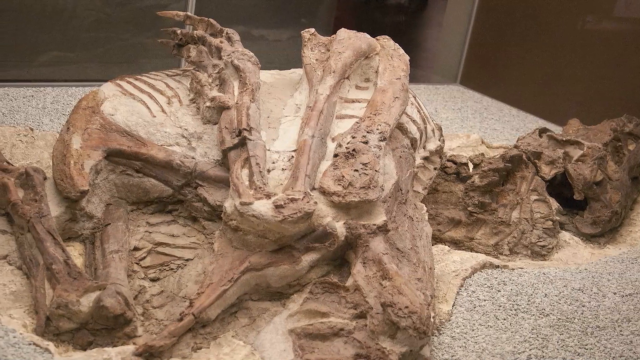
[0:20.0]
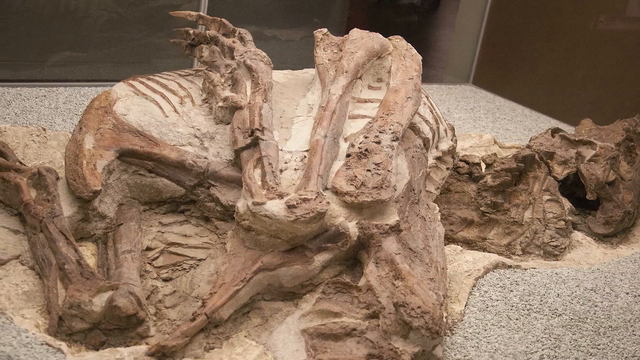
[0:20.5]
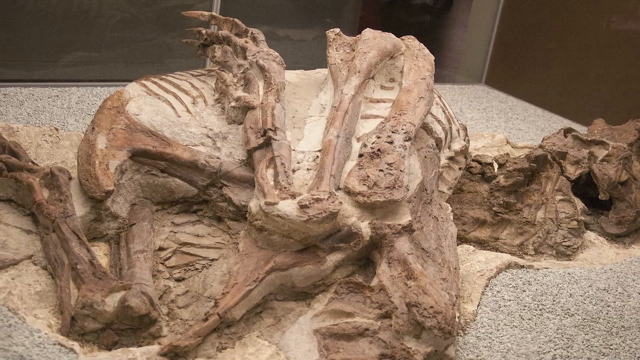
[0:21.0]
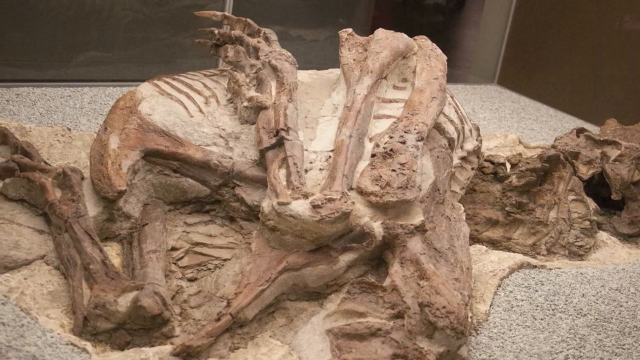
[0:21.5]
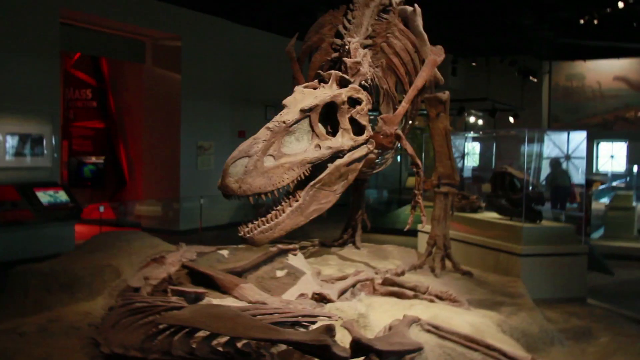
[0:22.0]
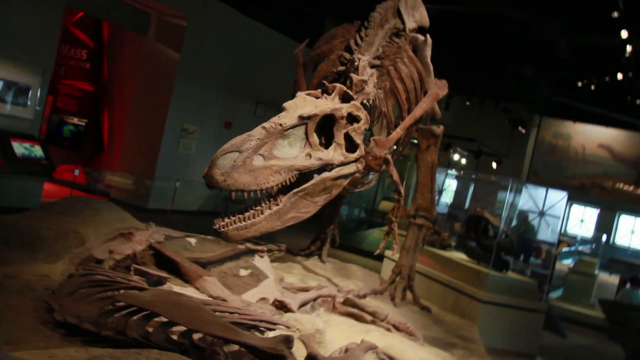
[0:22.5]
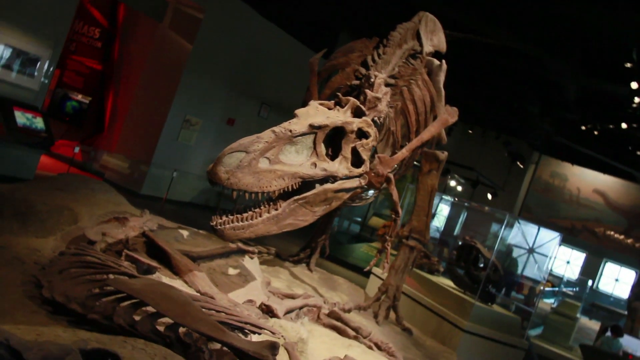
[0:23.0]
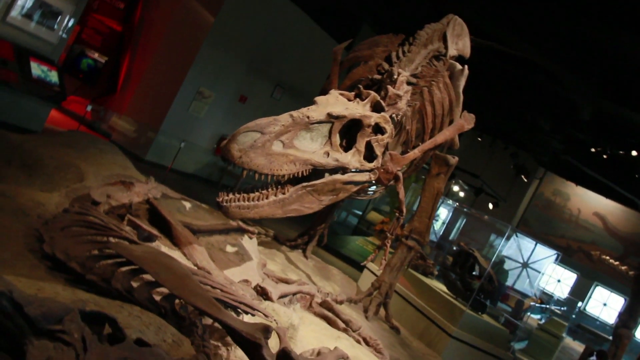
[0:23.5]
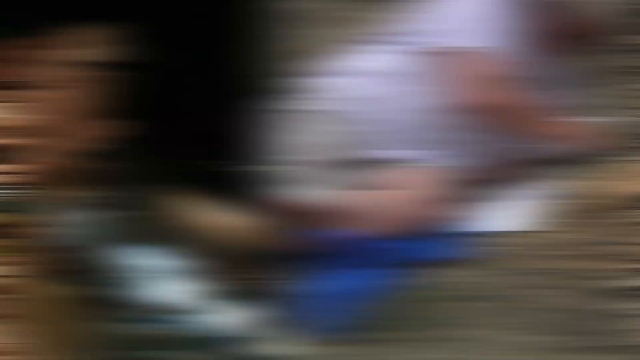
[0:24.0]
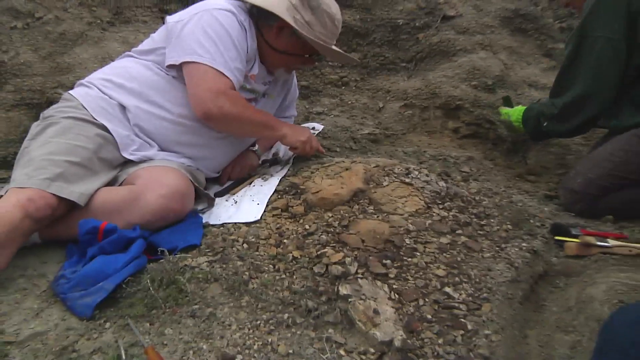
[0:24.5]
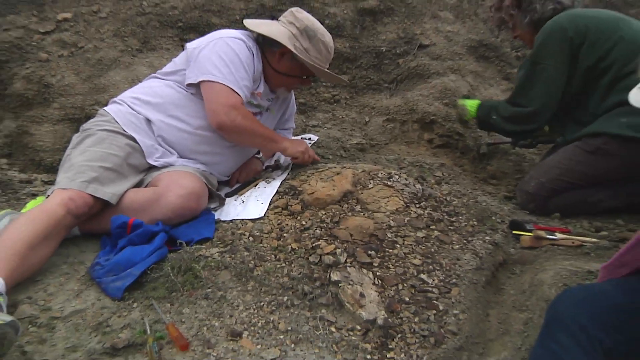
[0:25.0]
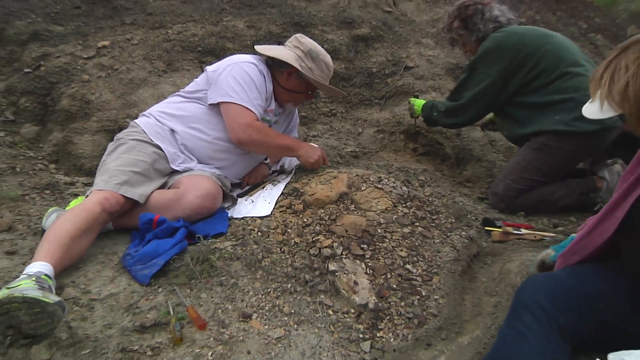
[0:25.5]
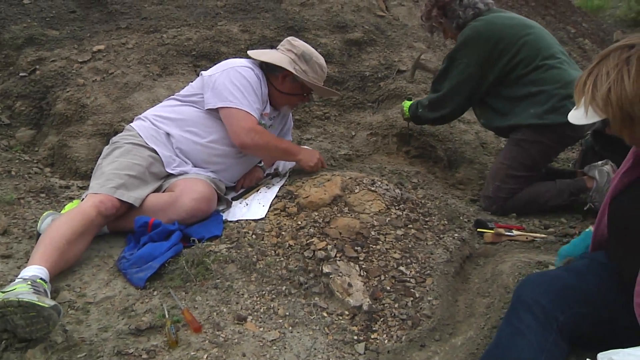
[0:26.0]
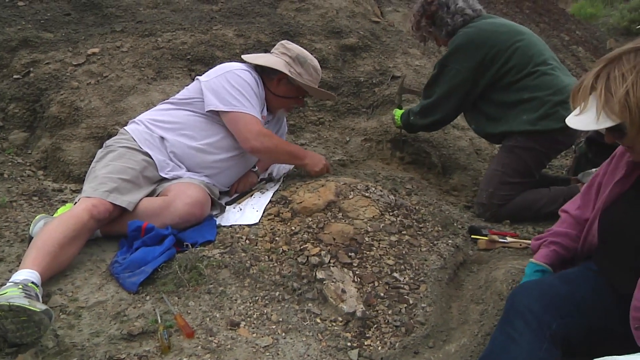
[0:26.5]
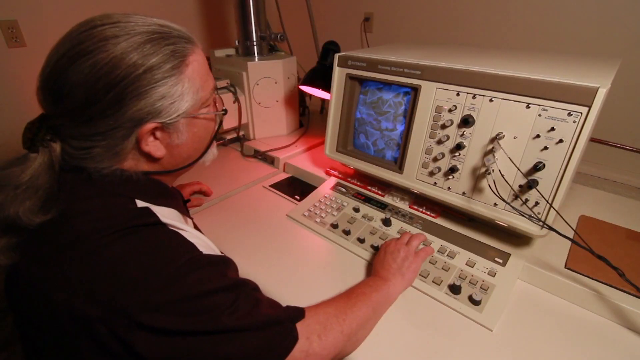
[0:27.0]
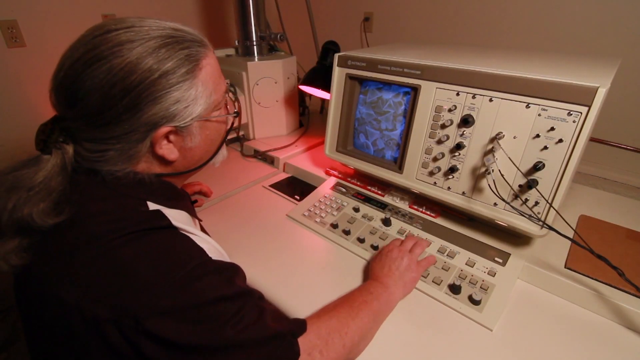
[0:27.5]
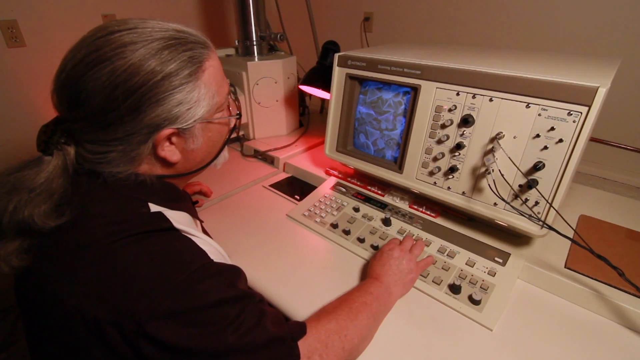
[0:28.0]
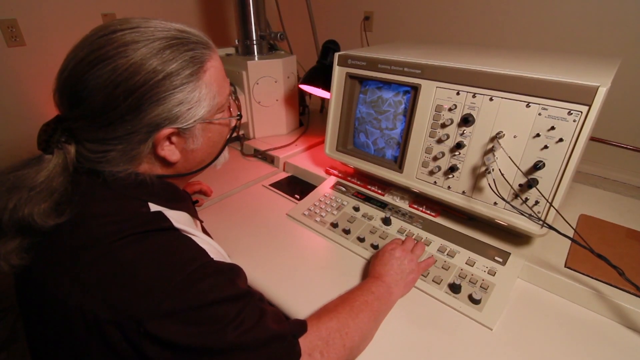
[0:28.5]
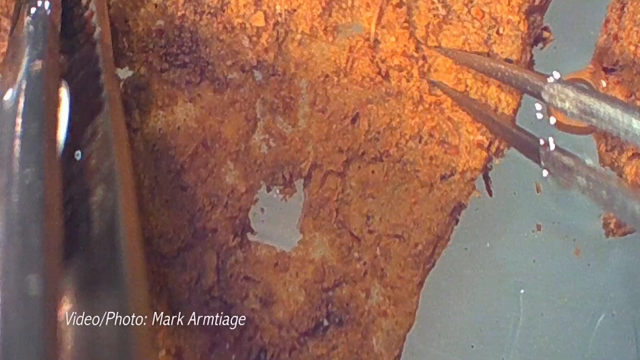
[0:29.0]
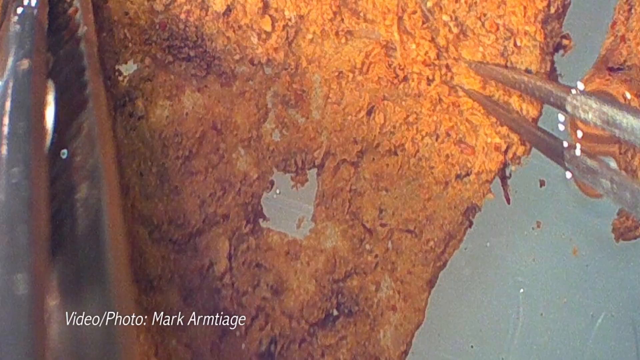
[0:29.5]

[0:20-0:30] A close-up shows what look like fossilized remains lying on a table, possibly a dinosaur. Next, reconstructed dinosaur bones are in a museum, with plexiglass display cases visible behind the dinosaur. Three people work on an archaeological dig: the person on the left lies on their left side, using a small tool in their right hand to scrape dirt away from something, while two people on the right also use tools to dig in the dirt. The scene switches to a man sitting in front of a large machine that has a small monitor screen on the left and switches and wires on the right. A keyboard is in front of the machine, and he presses buttons on it with his right hand as he looks at the display. What looks like a microscopic image of tissue appears briefly.